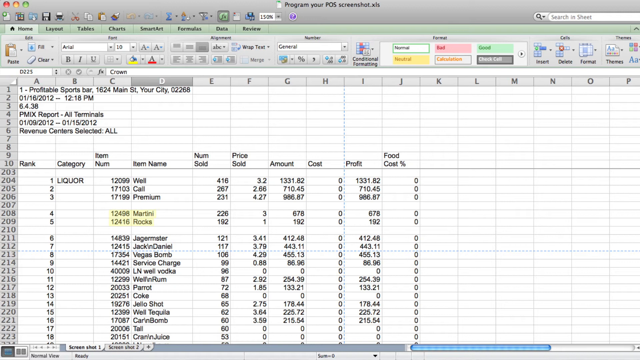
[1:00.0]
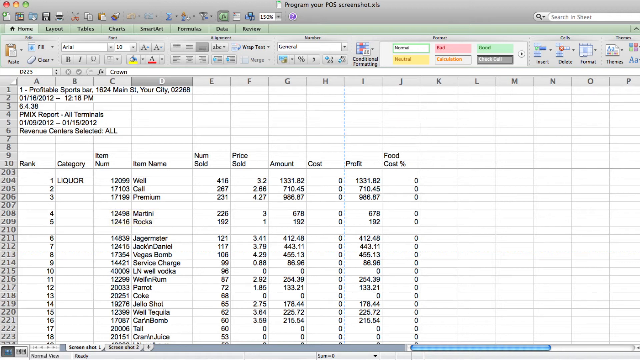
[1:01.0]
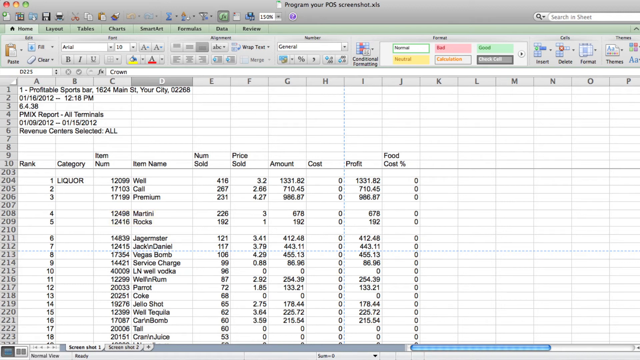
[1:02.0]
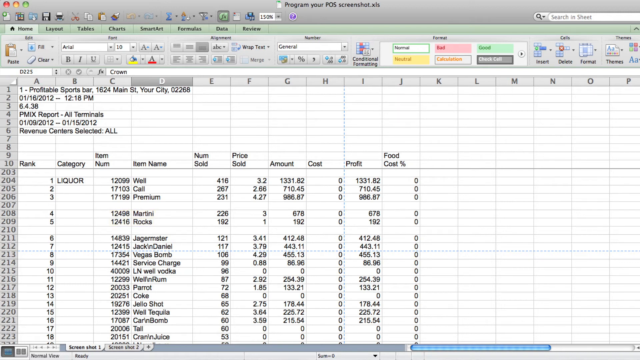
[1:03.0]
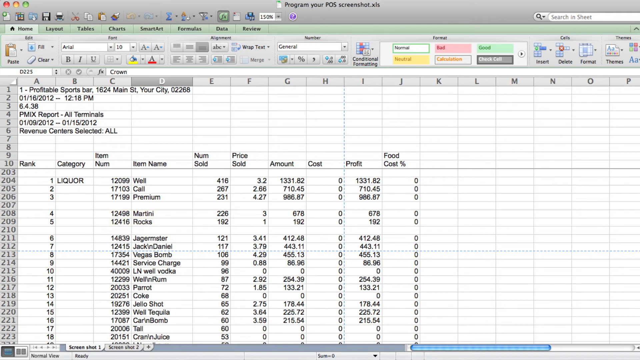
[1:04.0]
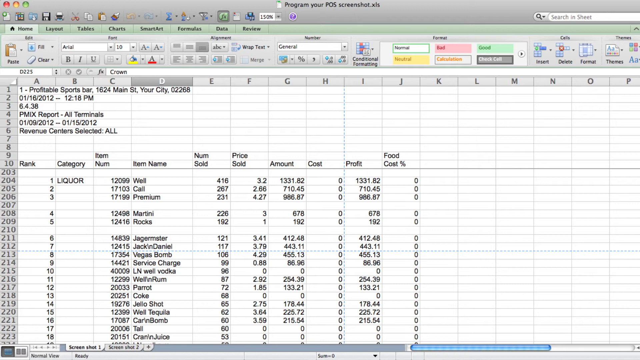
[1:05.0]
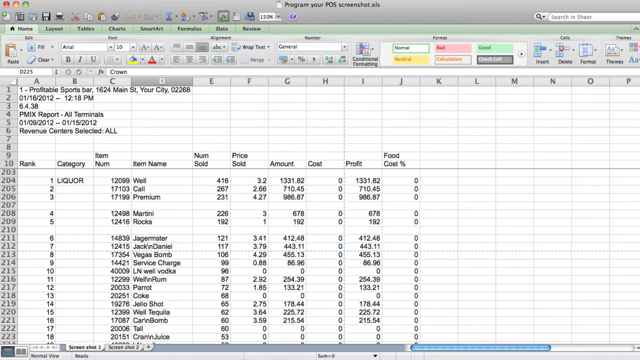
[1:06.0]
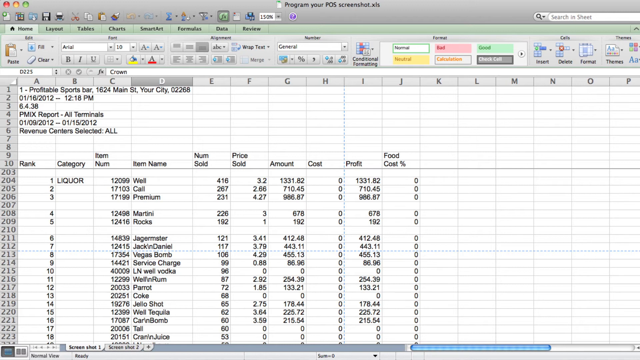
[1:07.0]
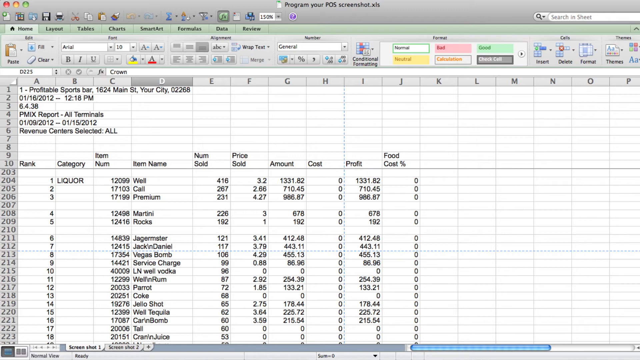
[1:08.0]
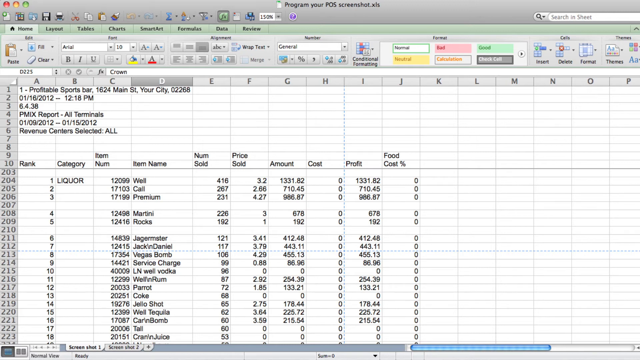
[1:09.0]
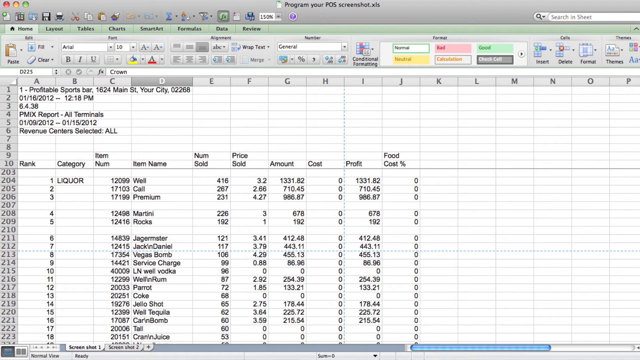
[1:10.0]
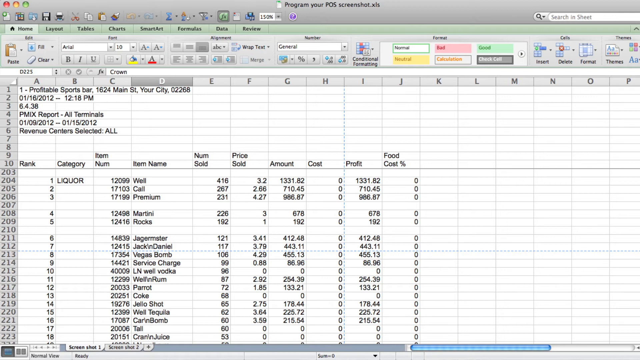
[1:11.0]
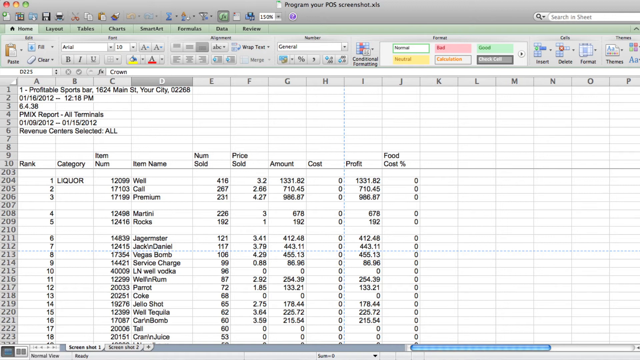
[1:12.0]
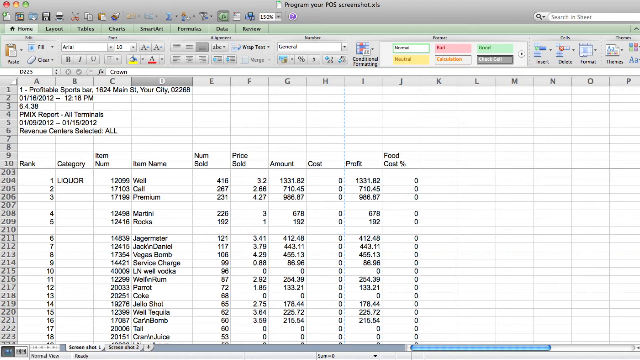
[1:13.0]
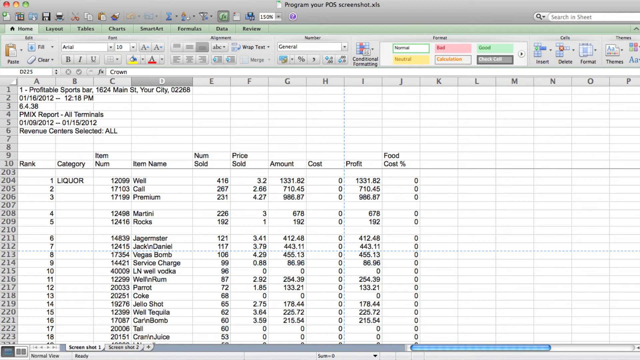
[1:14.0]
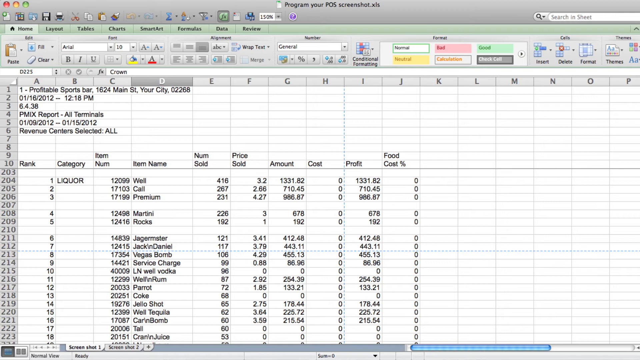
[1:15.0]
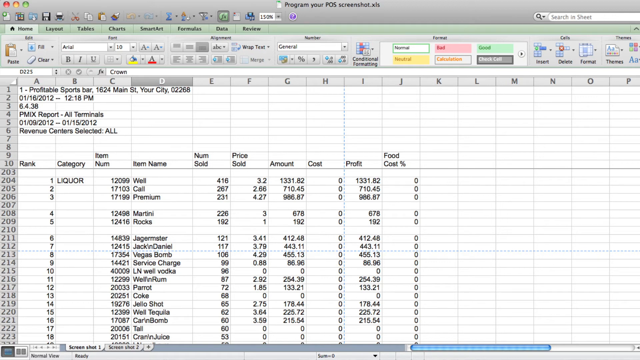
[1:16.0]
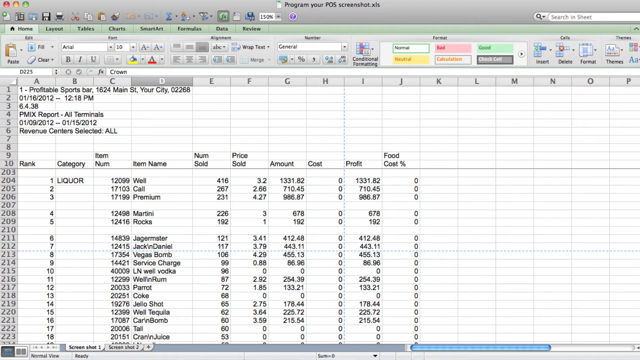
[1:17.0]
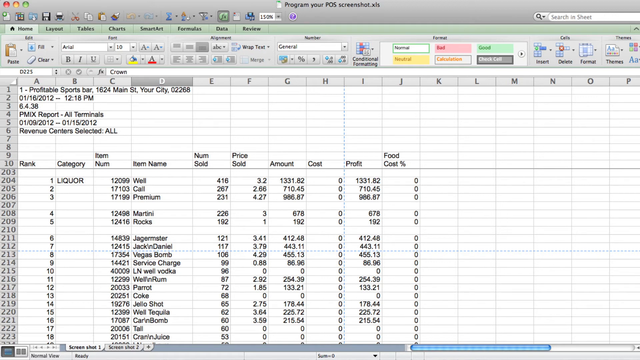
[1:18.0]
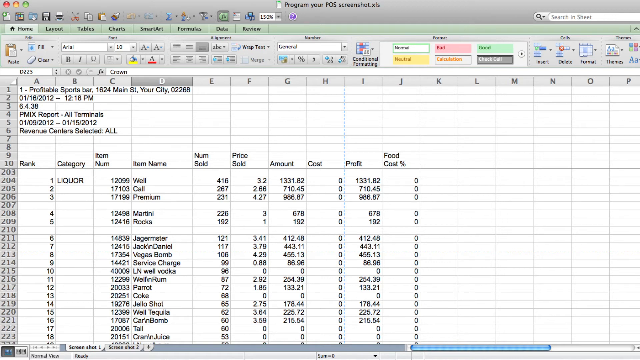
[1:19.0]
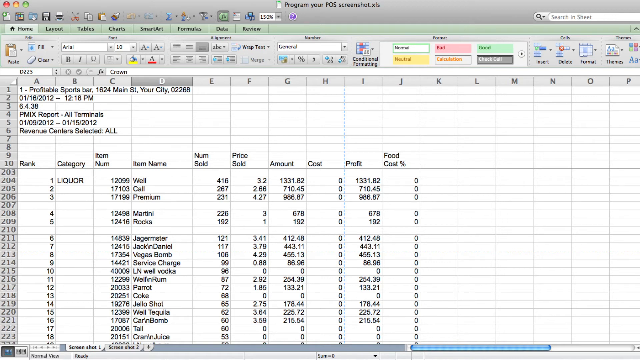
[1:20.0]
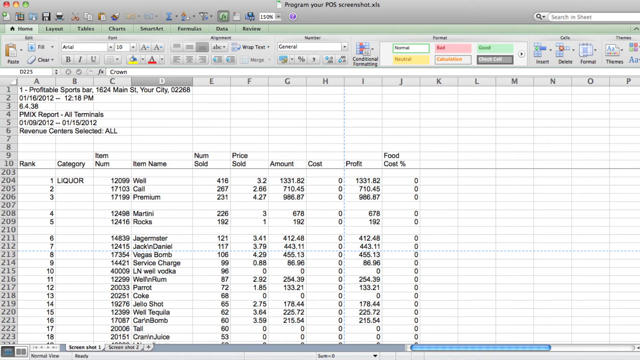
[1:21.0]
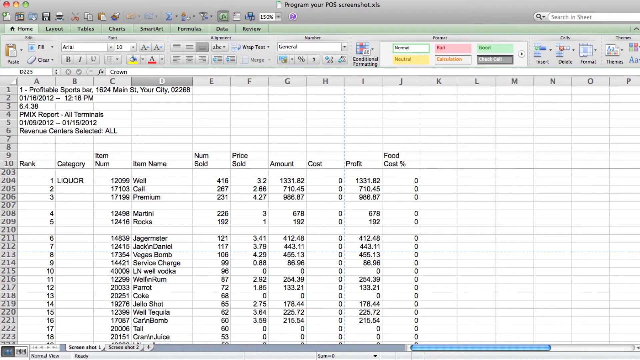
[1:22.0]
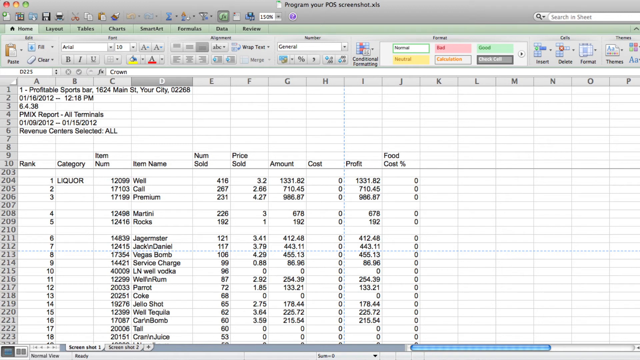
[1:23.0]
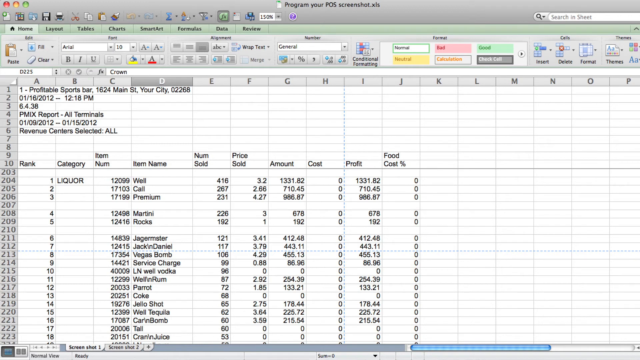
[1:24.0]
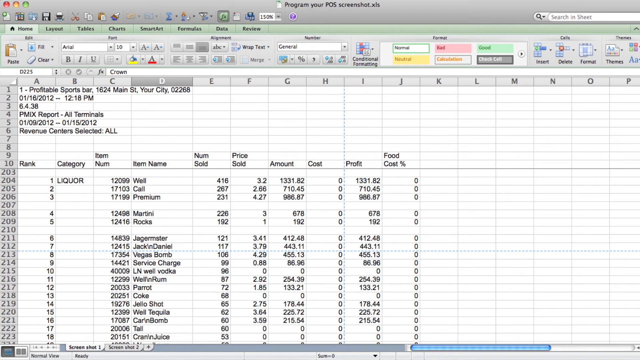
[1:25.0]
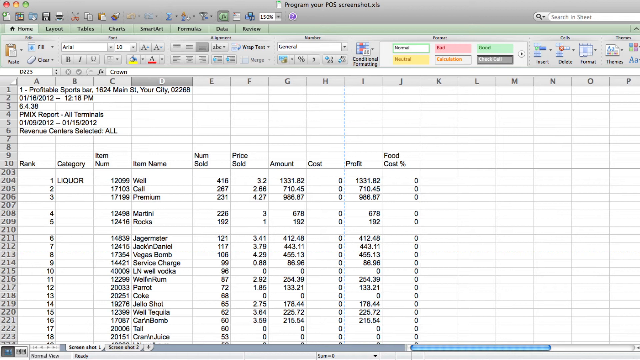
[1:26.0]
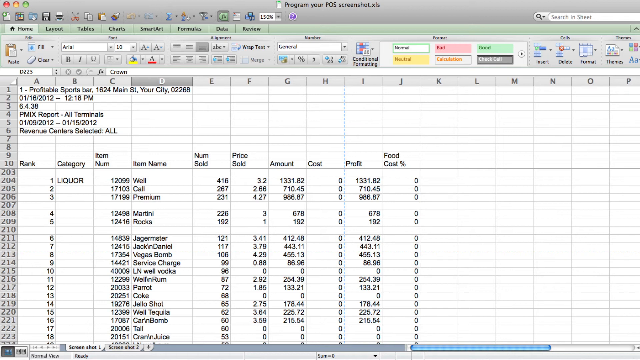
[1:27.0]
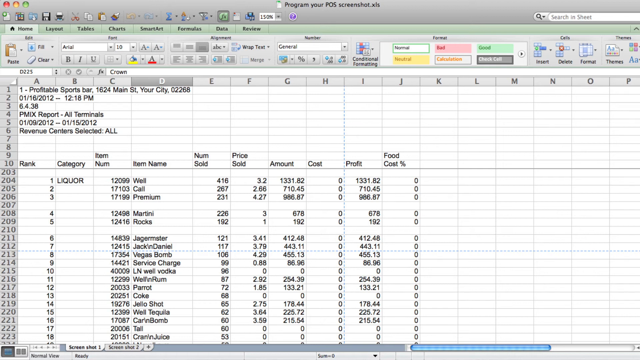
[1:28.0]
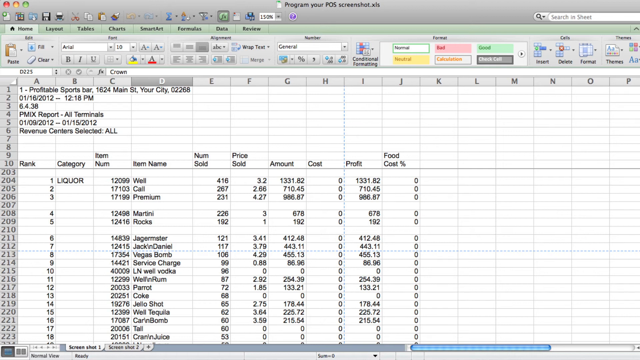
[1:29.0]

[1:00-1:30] An Excel document, "Program your POS screenshot", is on screen. It shows the name "profitable sports bar", the address, the creation date and time "1-16-2012" at "12:18 pm", a version number "6.4.38", "PMIX report - all terminals", a date range of "1-9-2012" to "1-15-2012", and "revenue center selected, all". The column headings are rank, category, item number, item name, number sold, price sold, amount, cost, profit and food cost, with data under each. Under item name are entries such as premium or well, types of drinks such as martini drinks and mixed drinks, how many drinks have rocks added, and drink names such as Jägermeister and Jack Daniels.